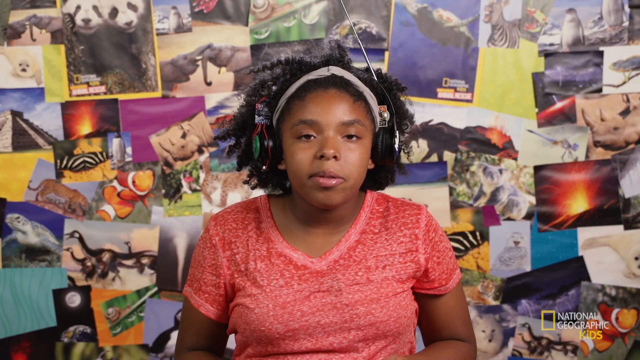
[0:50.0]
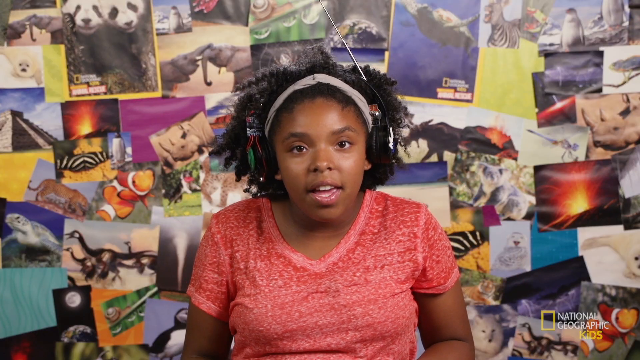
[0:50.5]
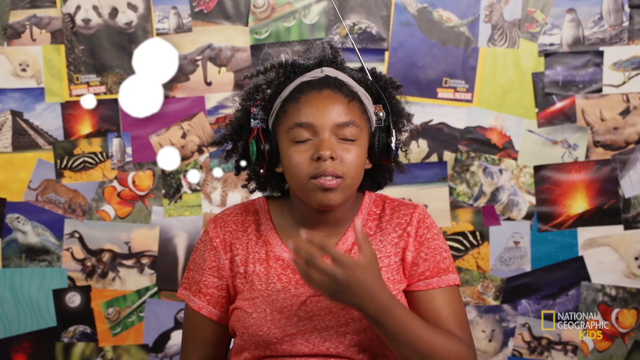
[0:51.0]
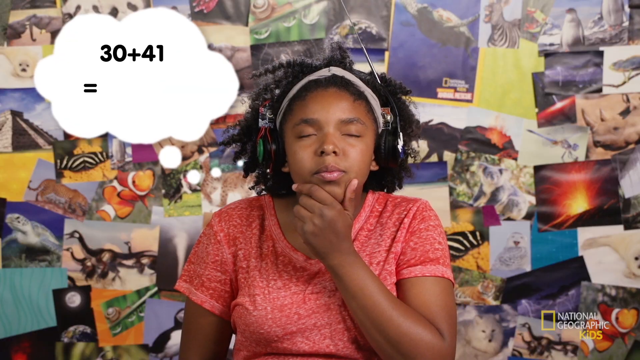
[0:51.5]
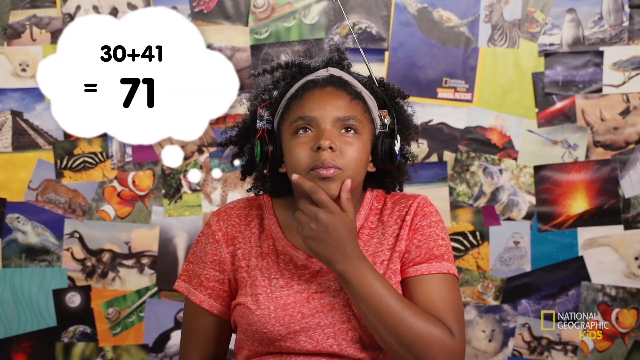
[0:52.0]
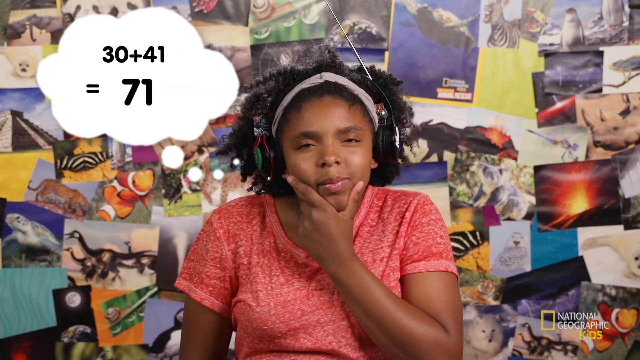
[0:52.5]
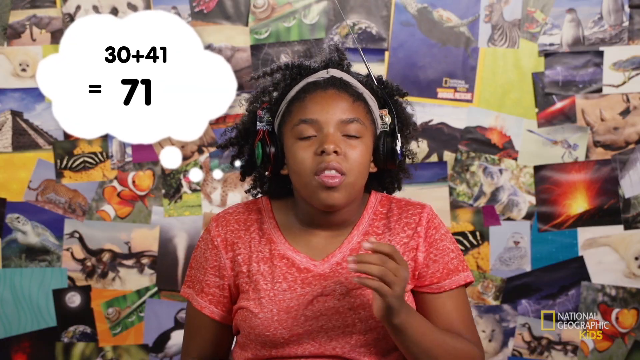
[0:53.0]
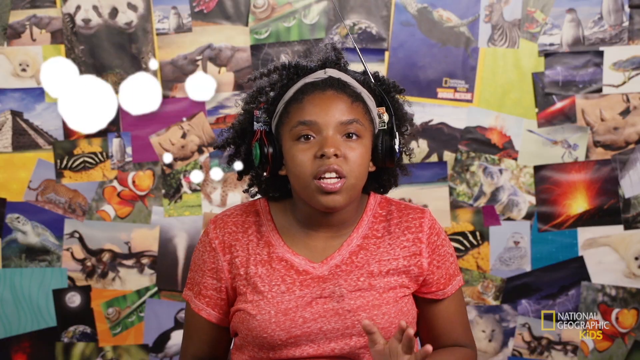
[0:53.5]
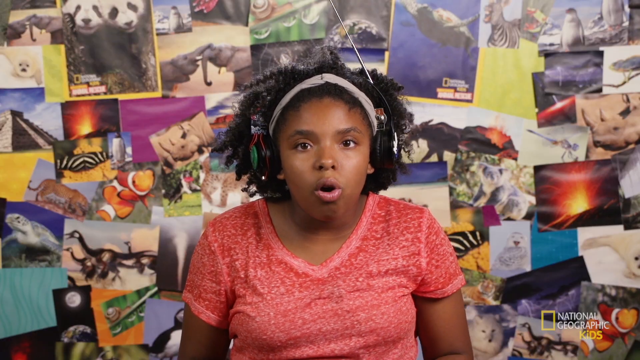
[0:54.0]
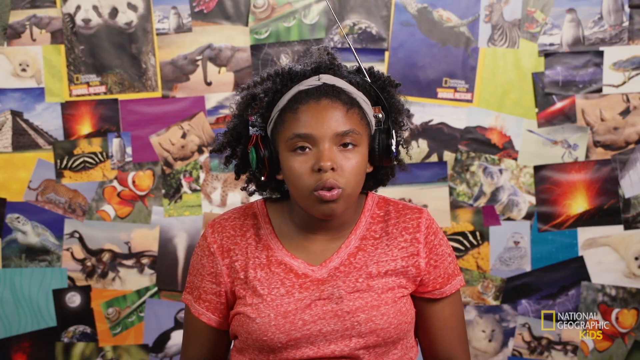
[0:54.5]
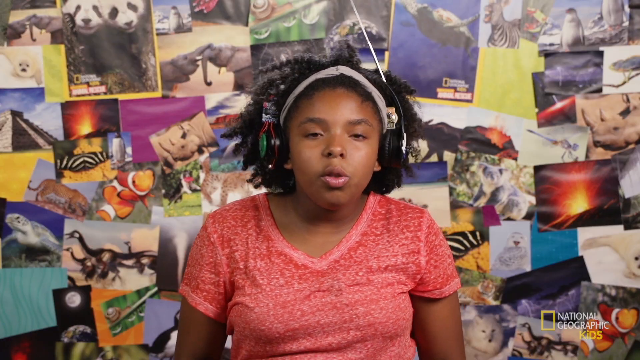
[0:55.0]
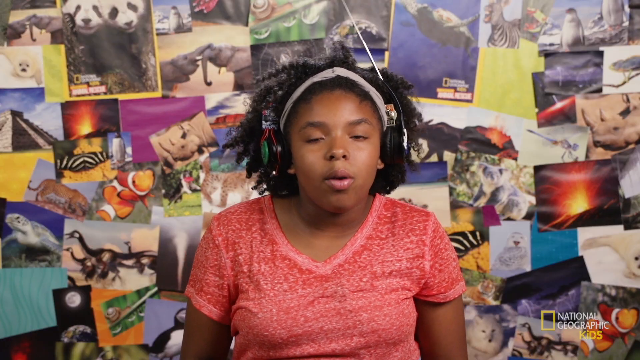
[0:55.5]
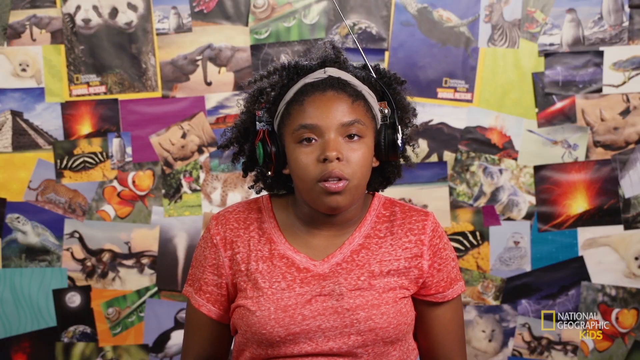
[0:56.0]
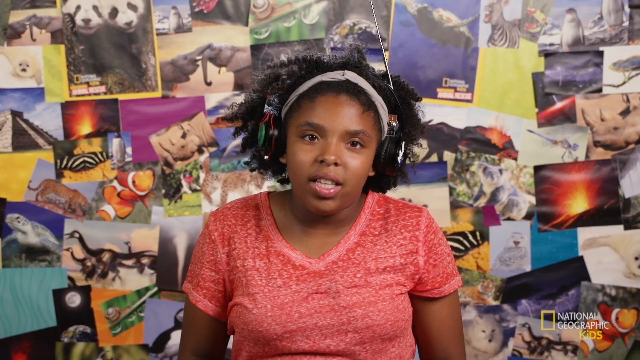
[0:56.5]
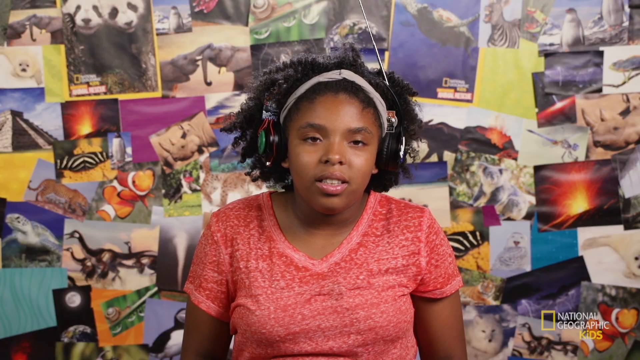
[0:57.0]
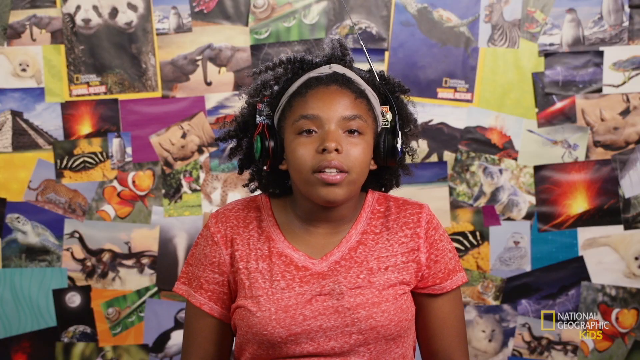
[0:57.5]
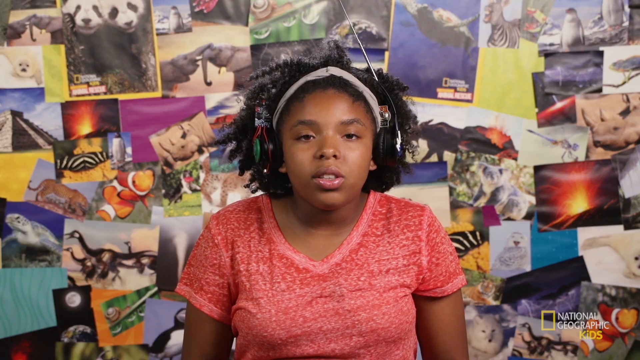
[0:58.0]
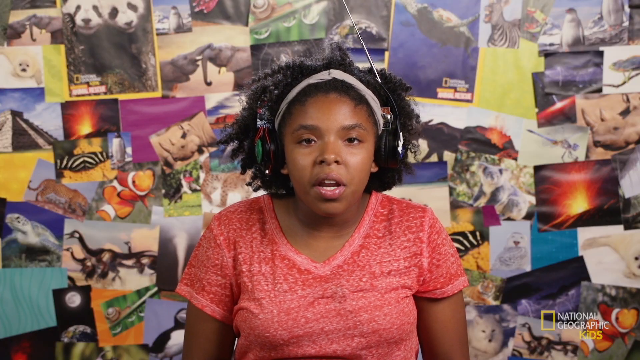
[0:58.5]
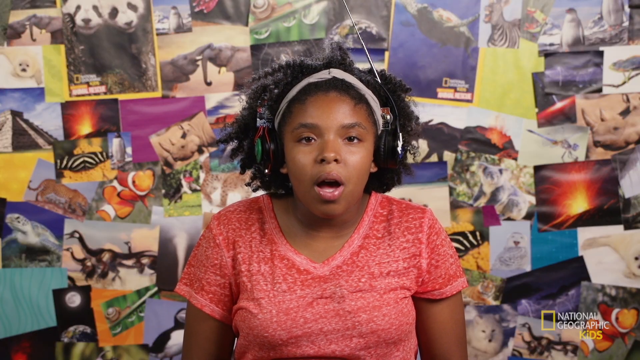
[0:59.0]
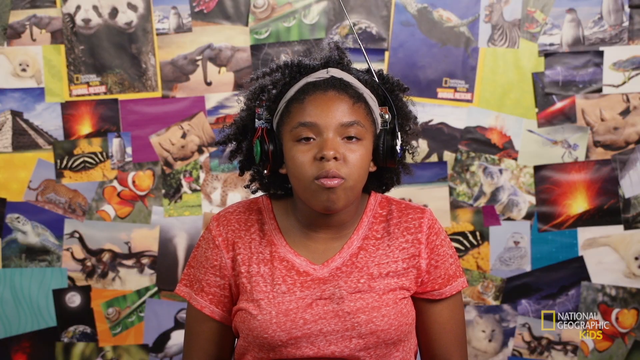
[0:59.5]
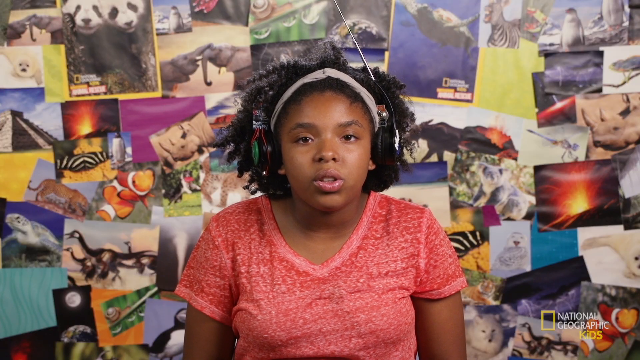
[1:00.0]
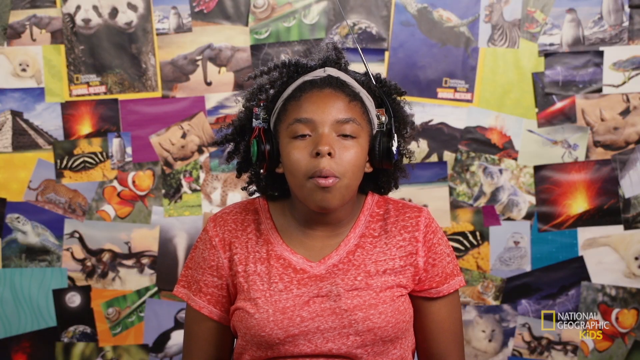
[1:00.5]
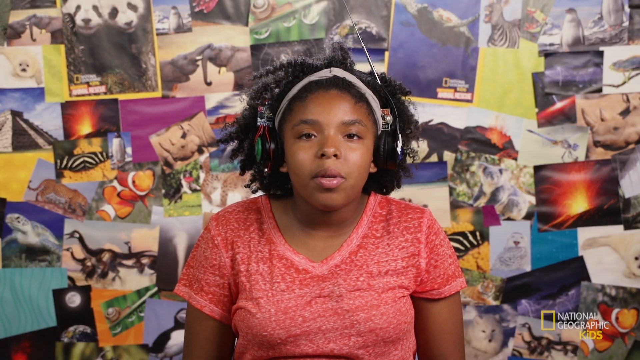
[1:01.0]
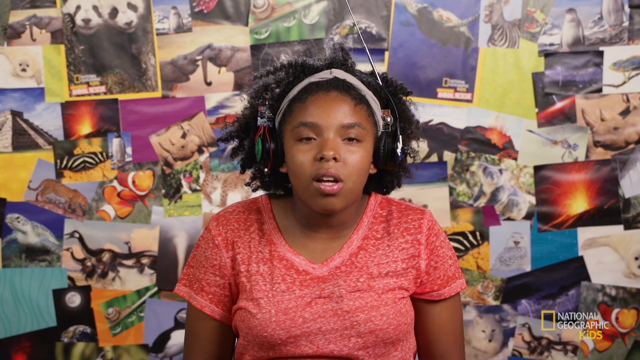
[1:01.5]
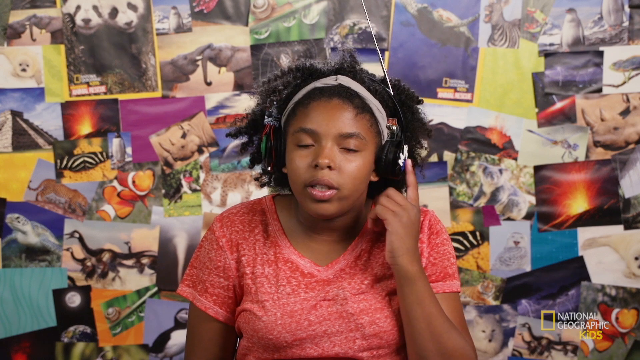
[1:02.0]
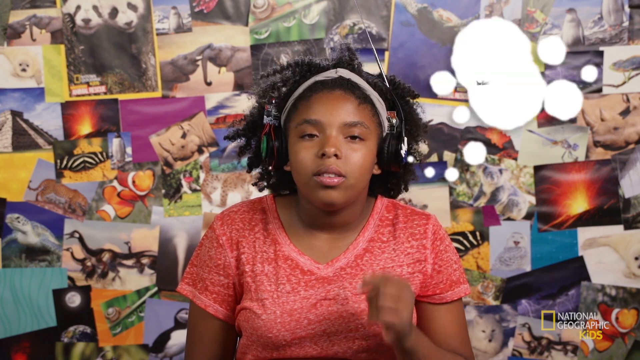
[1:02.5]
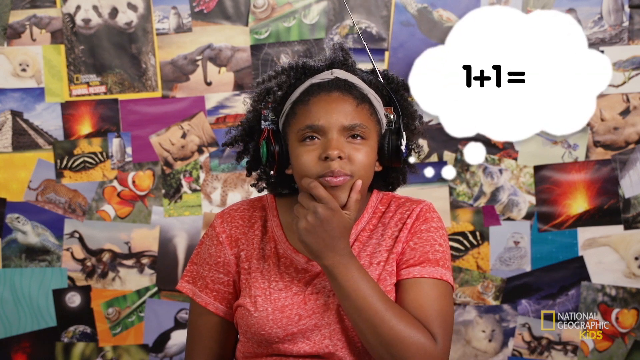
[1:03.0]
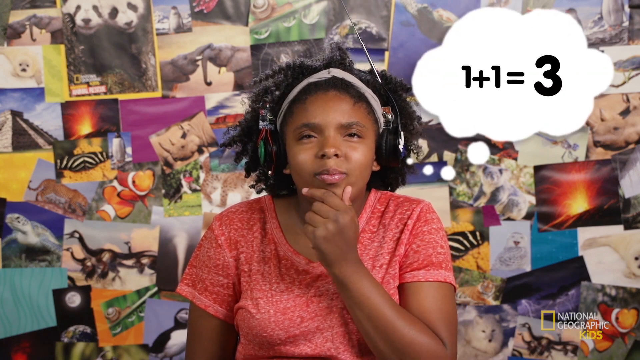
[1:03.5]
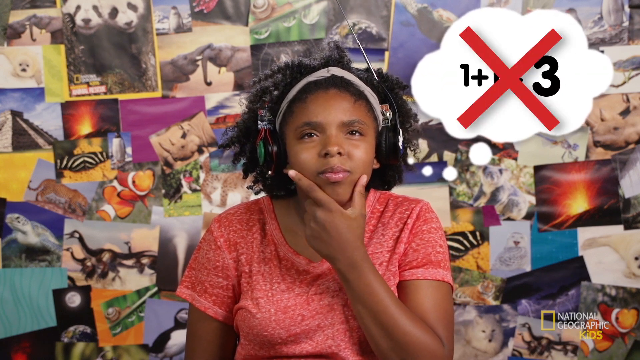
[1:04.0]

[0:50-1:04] The woman continues talking to the camera, wearing the headphones with the antenna. A bubble appears on the left part of the video, a small white cloud with numbers on it forming an addition: "30 plus 41", with "equal to 71" right below it. She rubs her chin a bit as if thinking. The headset has various instruments and artifacts on it: some very weird, stylish additions on the right side and, on the left side, the antenna pointing up above her. She taps the left headphone with her finger, and another cloud bubble forms showing the addition "1 plus 1" equal to "3", which is then crossed out with a red X indicating it is wrong. The woman keeps her fingers on her chin, thinking.